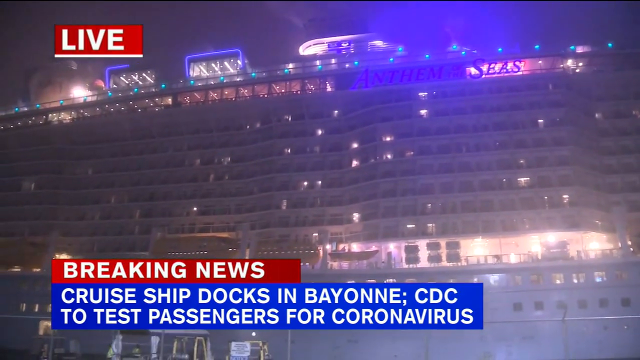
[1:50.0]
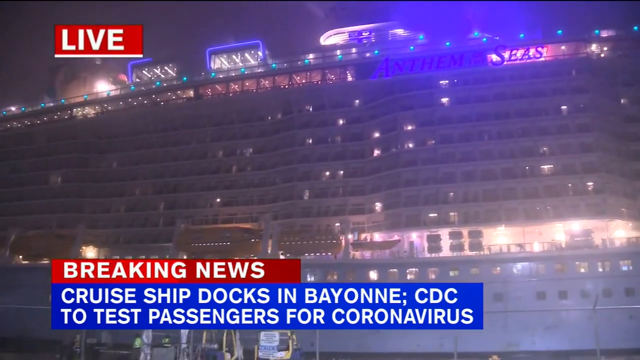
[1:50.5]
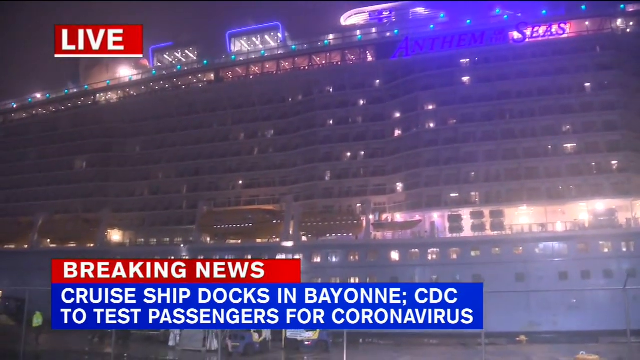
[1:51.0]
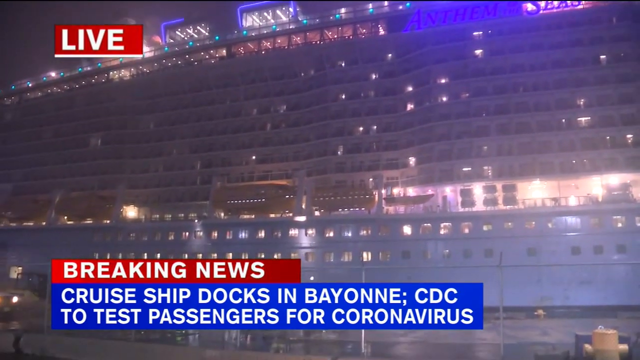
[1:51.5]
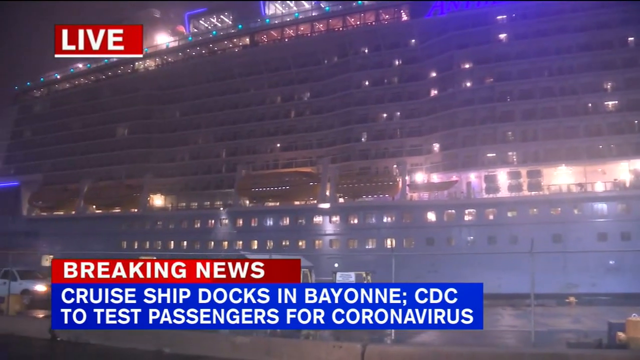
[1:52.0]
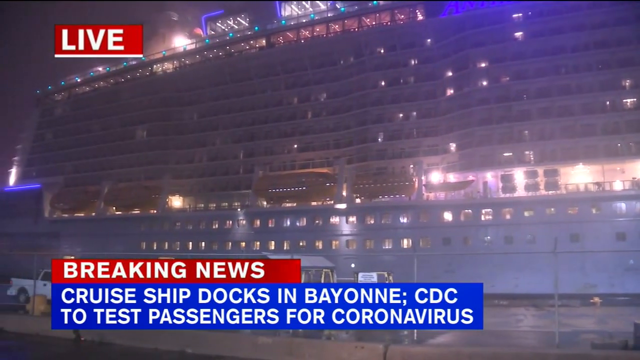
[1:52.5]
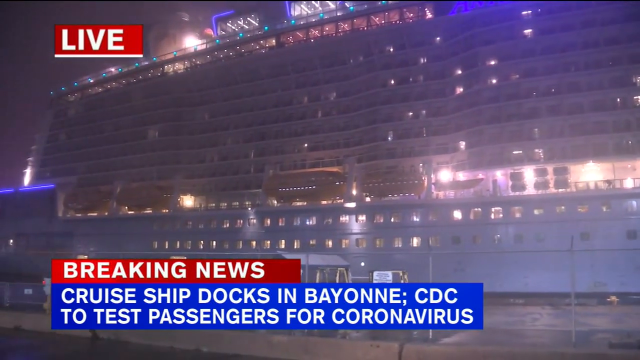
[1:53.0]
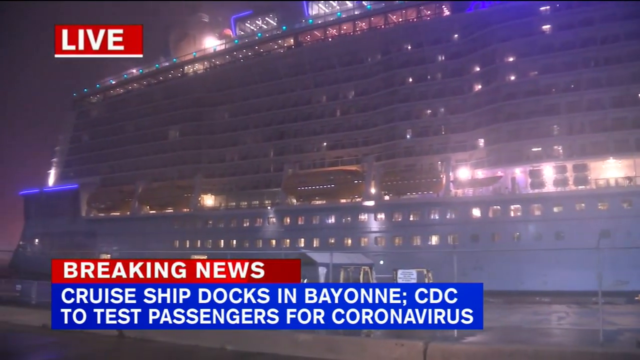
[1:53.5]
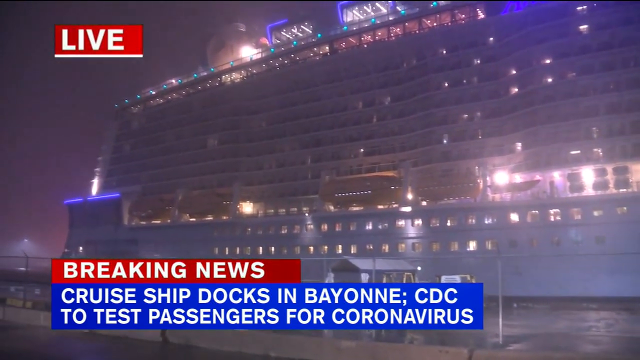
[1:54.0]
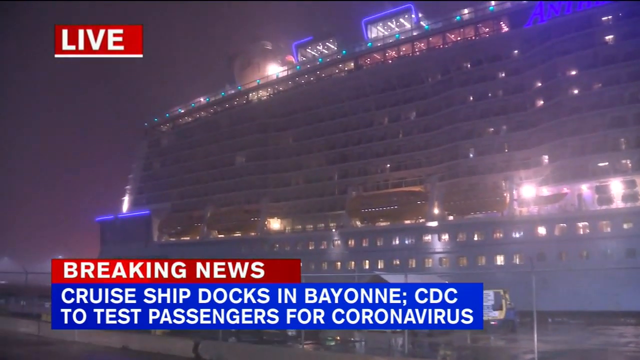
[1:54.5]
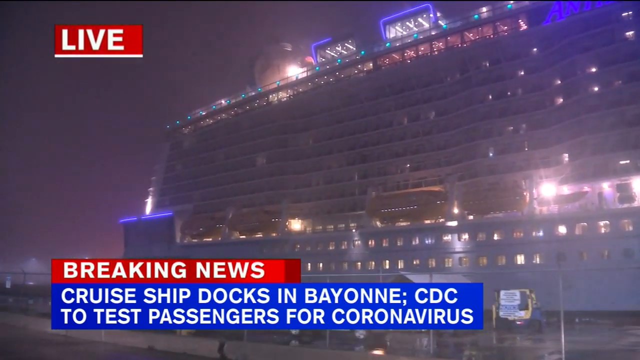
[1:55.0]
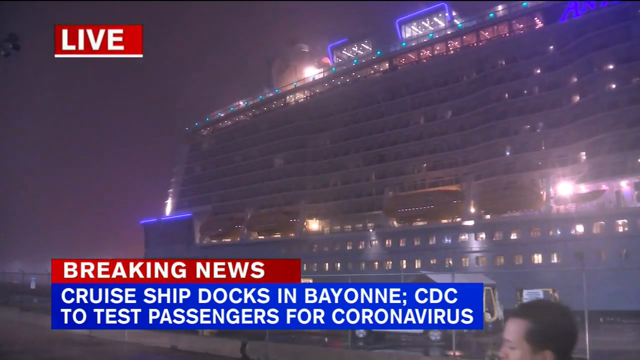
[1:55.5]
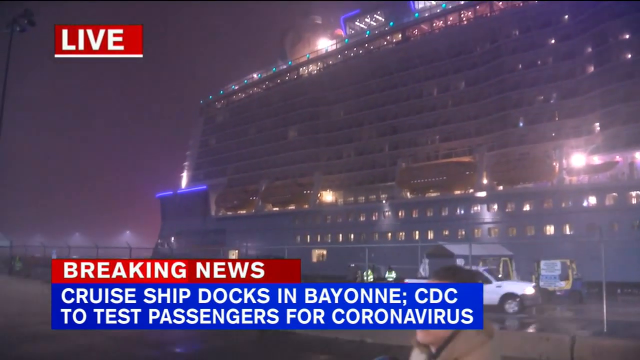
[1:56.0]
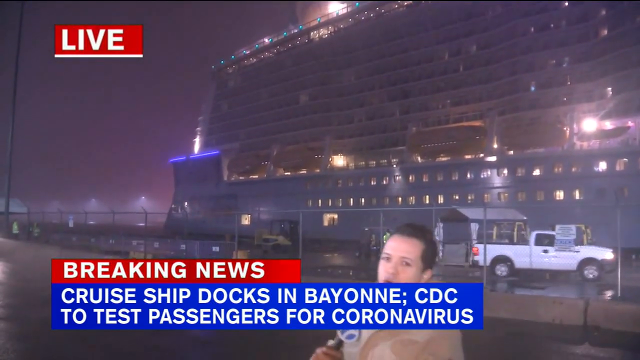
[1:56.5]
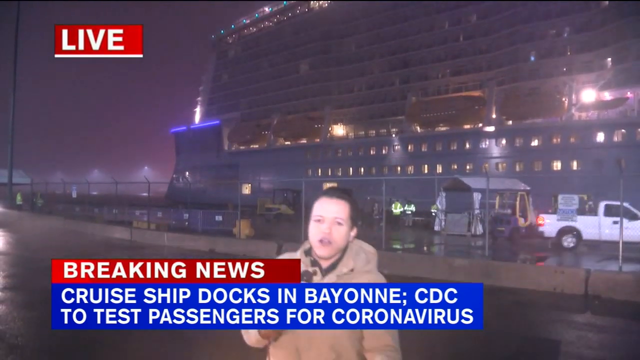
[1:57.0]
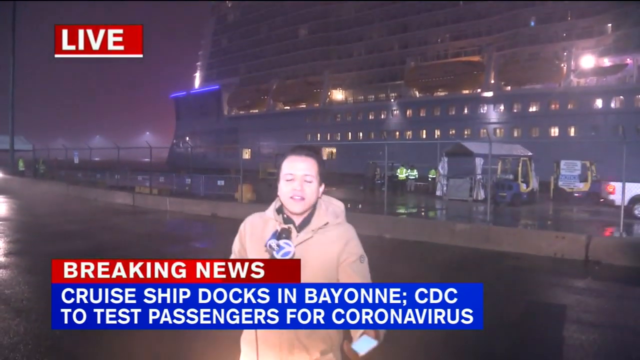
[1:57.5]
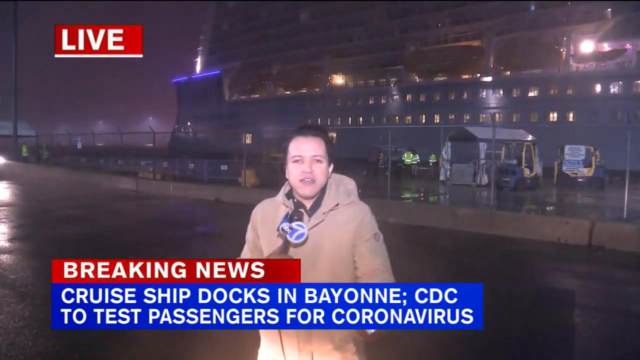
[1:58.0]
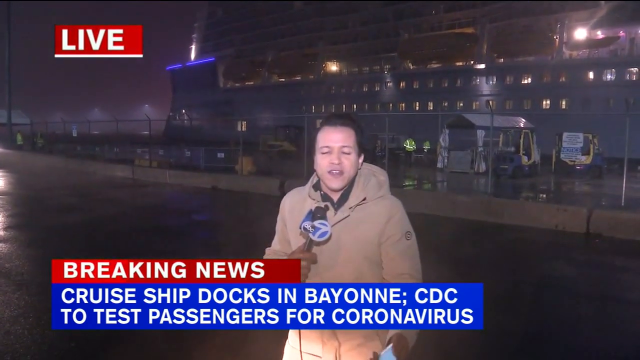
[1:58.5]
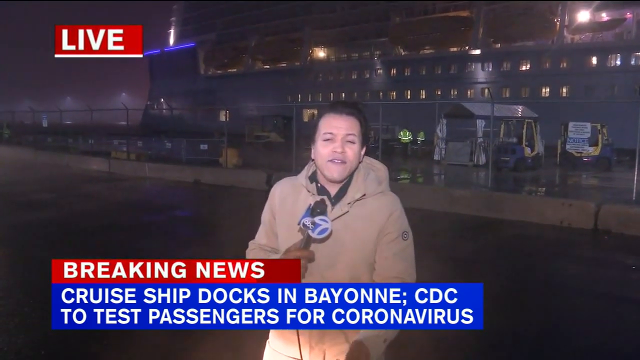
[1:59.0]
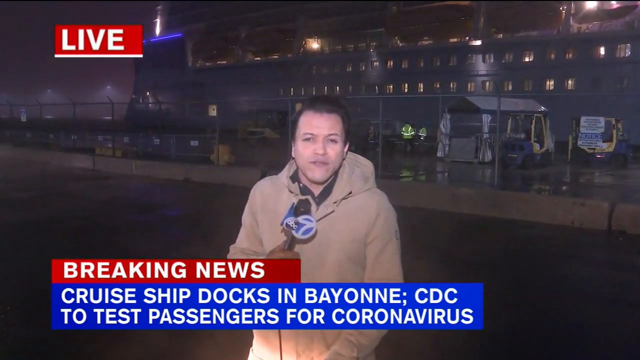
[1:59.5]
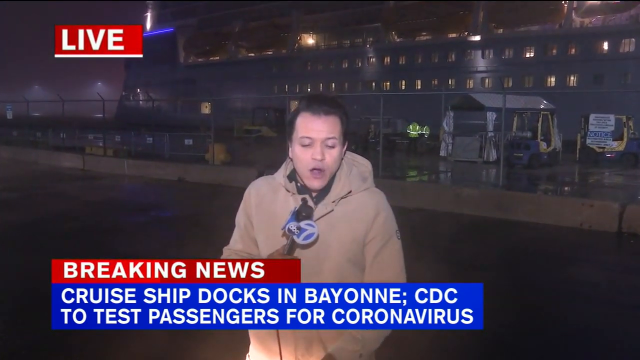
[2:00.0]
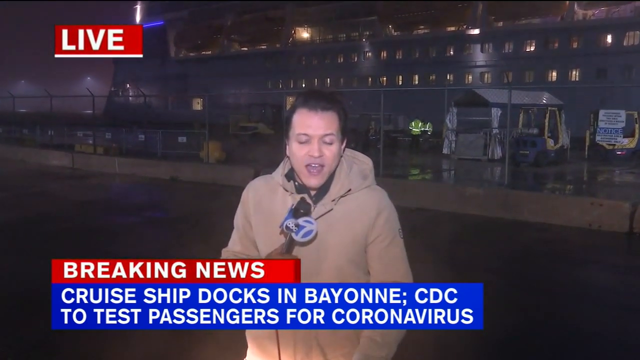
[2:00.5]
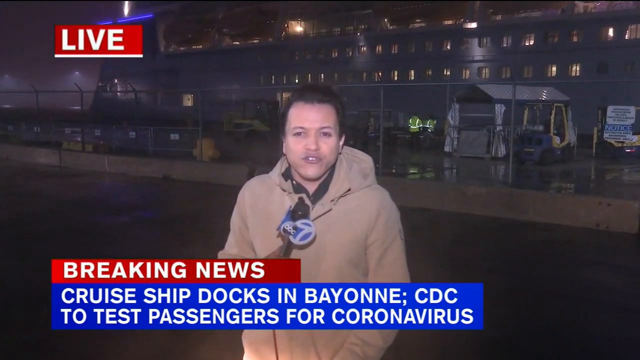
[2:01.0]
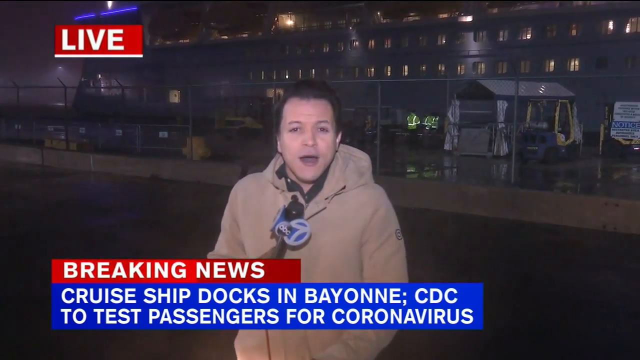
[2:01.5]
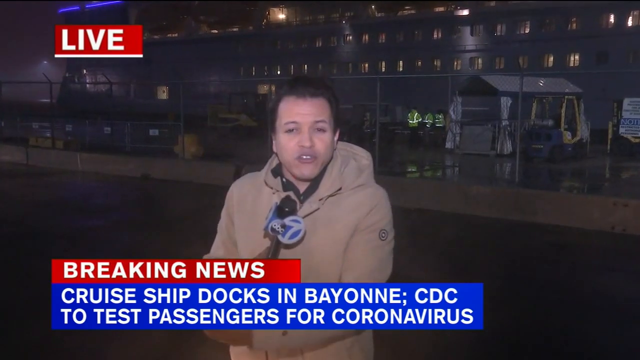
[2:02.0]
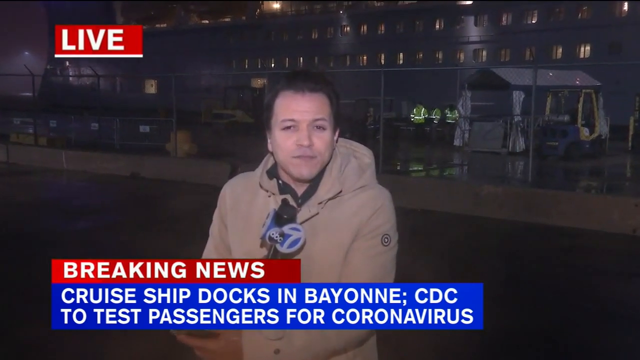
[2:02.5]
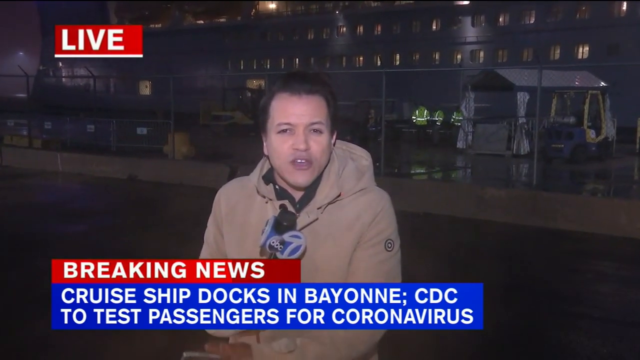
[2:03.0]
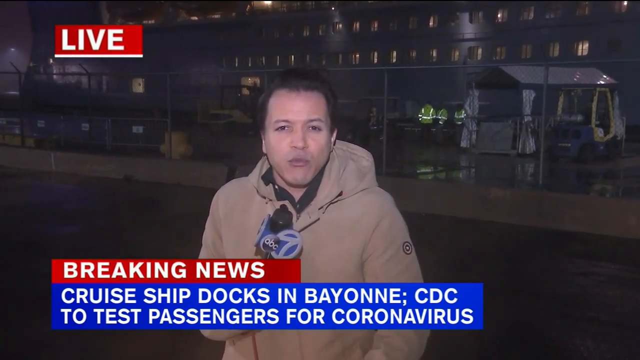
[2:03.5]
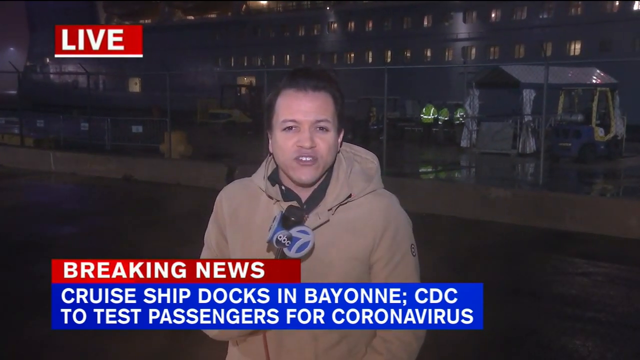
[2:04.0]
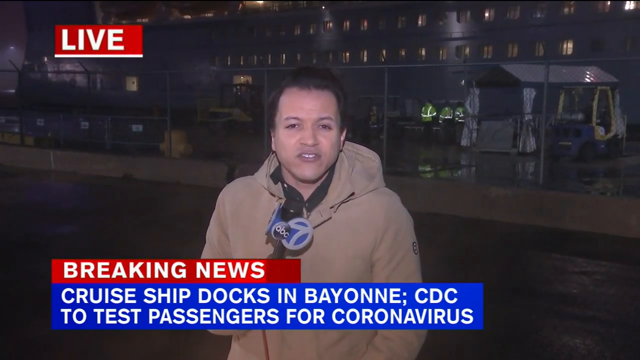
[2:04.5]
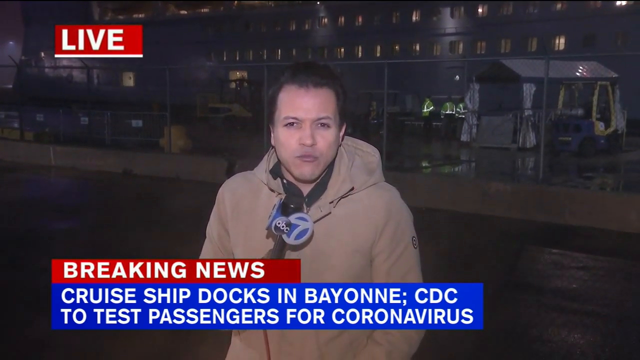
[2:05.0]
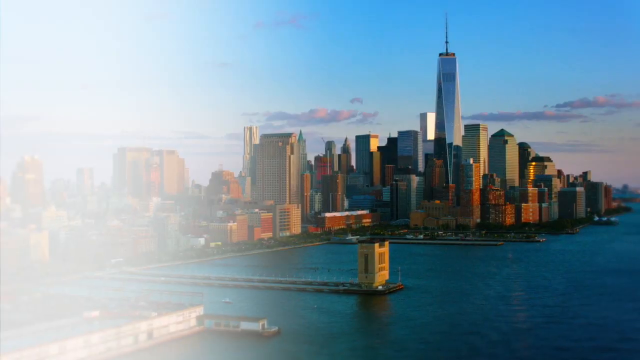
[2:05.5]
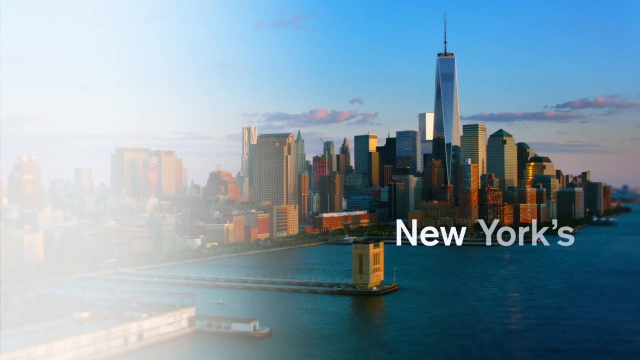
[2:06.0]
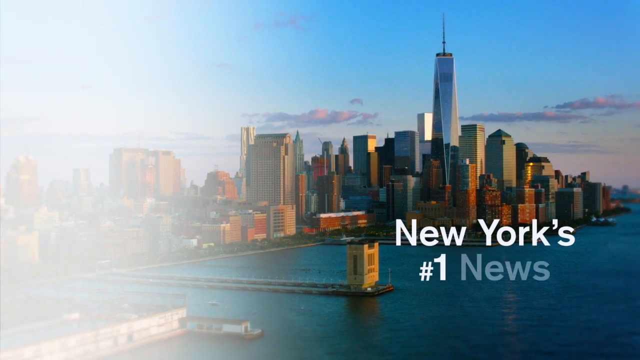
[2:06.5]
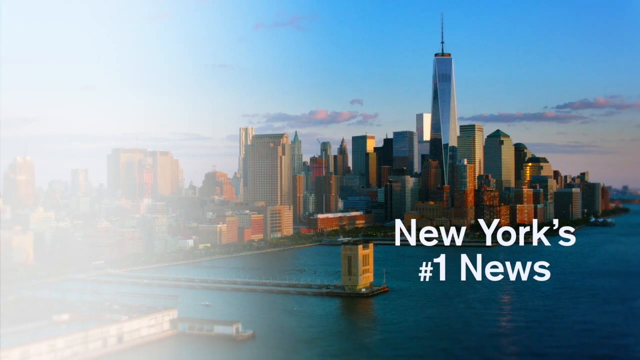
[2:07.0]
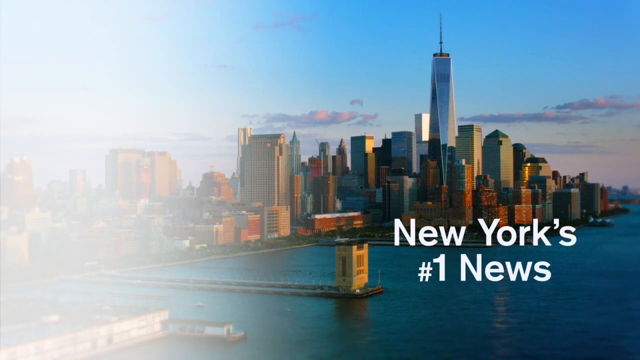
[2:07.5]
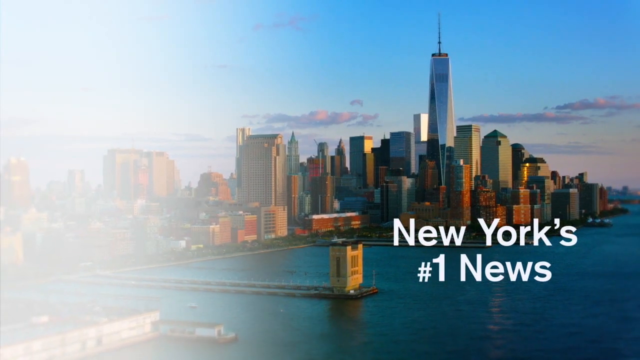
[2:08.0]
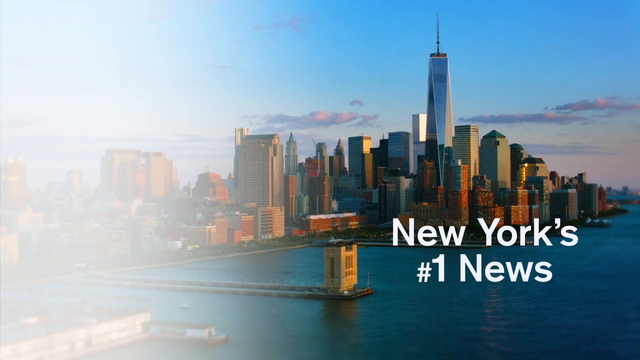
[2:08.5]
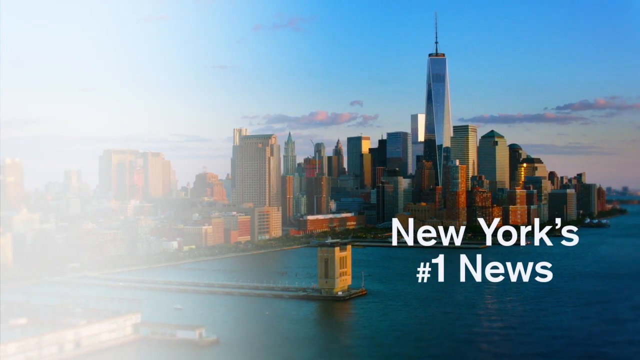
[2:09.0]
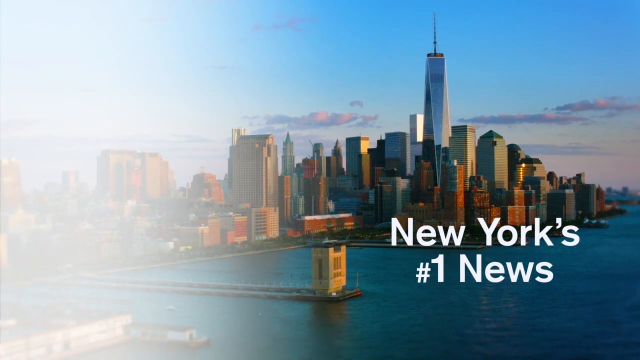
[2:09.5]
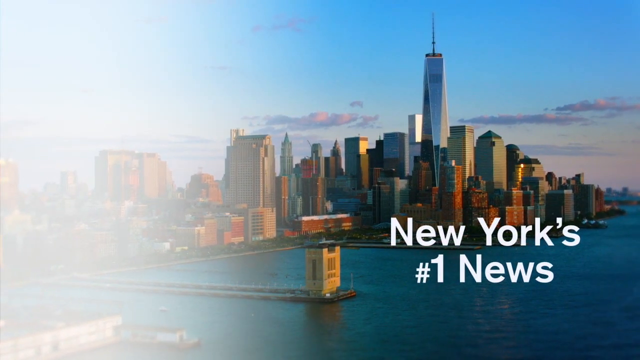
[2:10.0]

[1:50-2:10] A big cruise ship has "Diamond Princess" written on it. A few people are next to a white ambulance with Japanese characters and the word "ambulance" on each side. The people are dressed in what appears to be protective gear; one person is in a light blue suit and another in a yellow vest, and they seem to be waiting or directing the ambulance. The setting is a large open port area on a clear, bright day. A message on screen says "eight American on the Japanese cruise ship we have tested positive for coronavirus," with "breaking news" on top. The shot changes from the ship to the ambulance. The focus then shifts to a different cruise ship named Anthem of the Seas, a Royal Caribbean cruise ship, with the name written on each side, at a port in Bayonne, New Jersey. It is night, or at least a very dark and foggy day. The ship is massive with countless lighted windows and multiple decks, and the name is brightly lit in blue on each side. A wide, static view shows the ship at the dock. The shot shifts to a news reporter standing in front of the ship, wearing a tan jacket and holding a microphone with an ABC logo. A message on screen says "breaking news" and "cruise ship docks in Bayonne. CDC to test passenger for coronavirus."